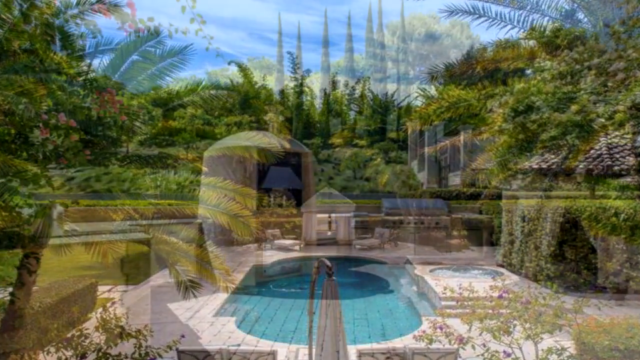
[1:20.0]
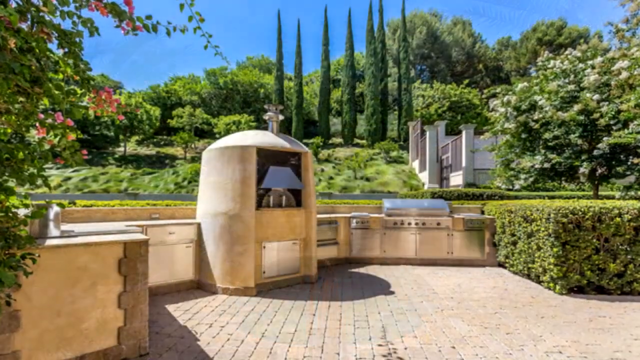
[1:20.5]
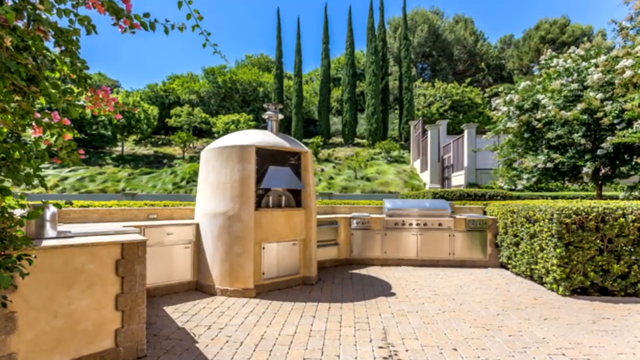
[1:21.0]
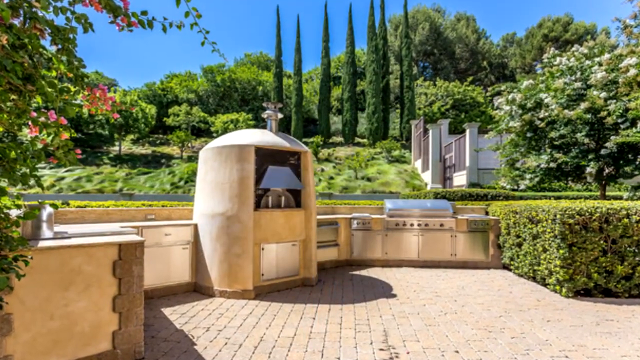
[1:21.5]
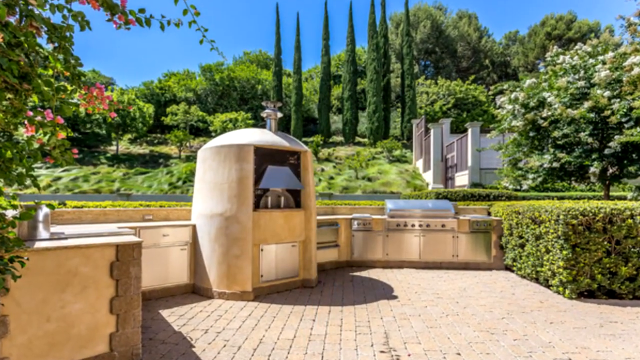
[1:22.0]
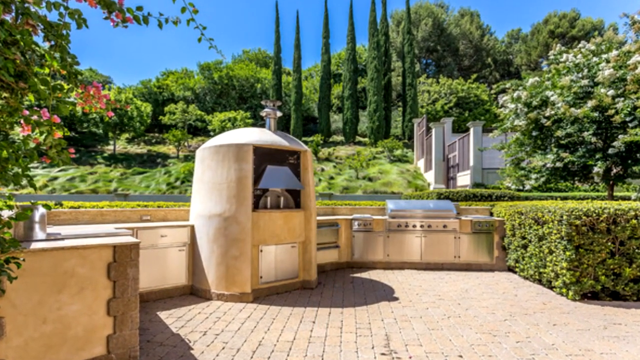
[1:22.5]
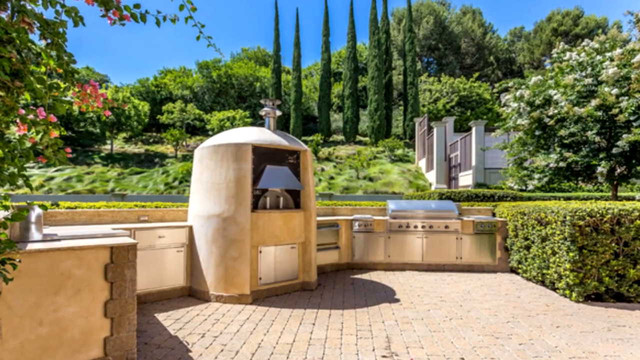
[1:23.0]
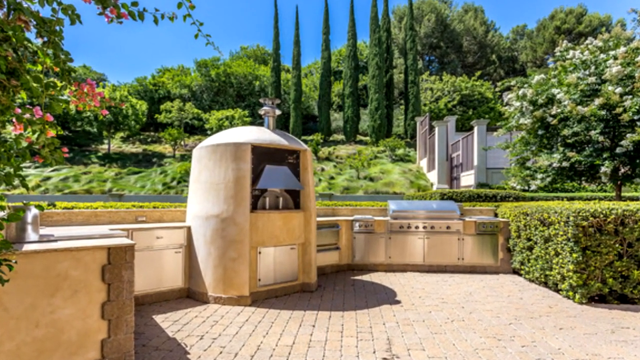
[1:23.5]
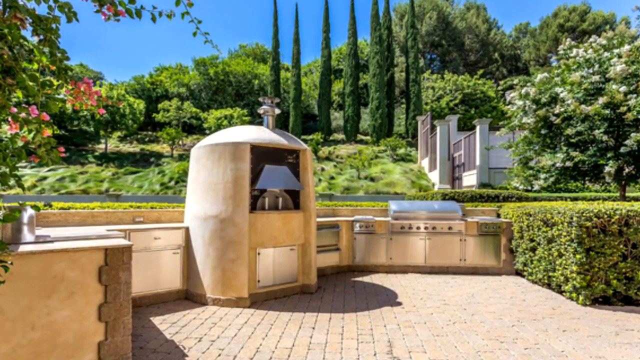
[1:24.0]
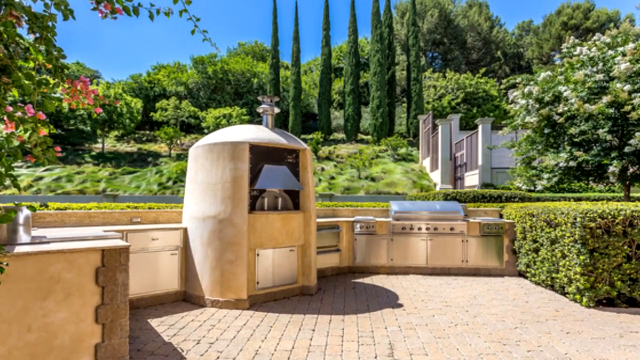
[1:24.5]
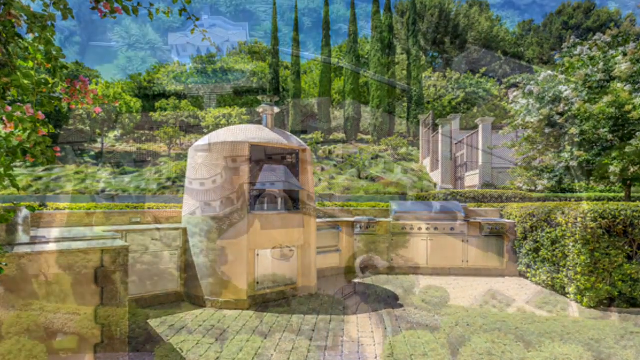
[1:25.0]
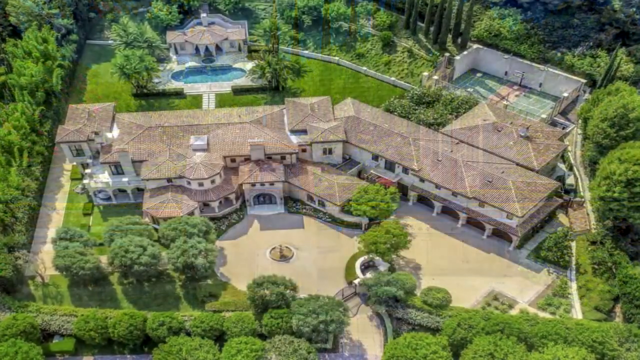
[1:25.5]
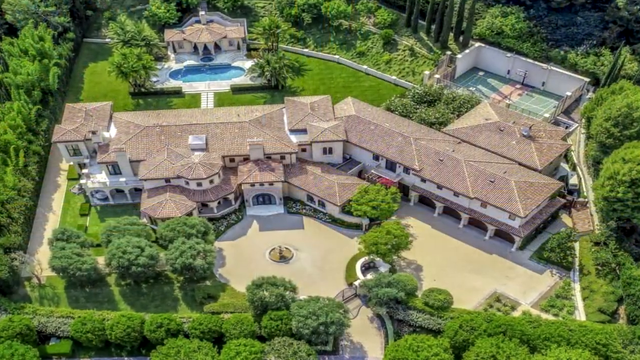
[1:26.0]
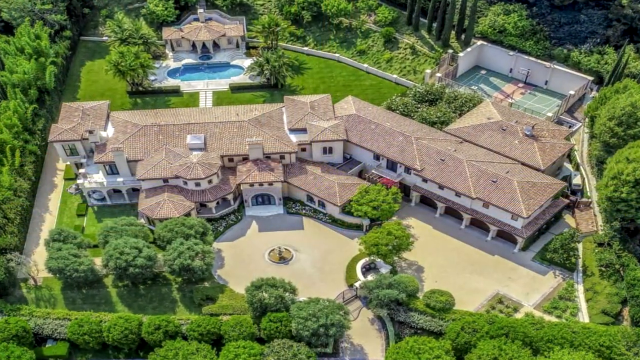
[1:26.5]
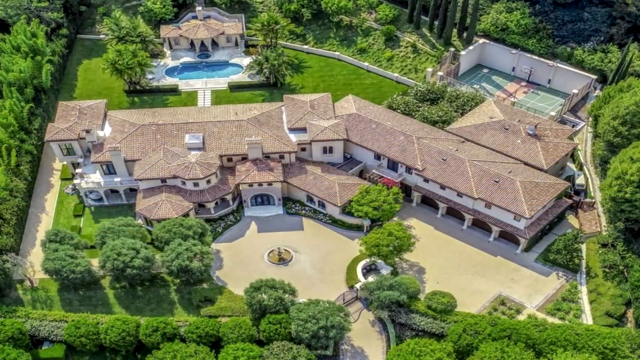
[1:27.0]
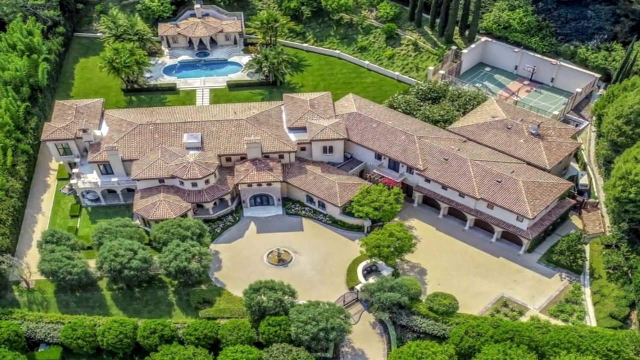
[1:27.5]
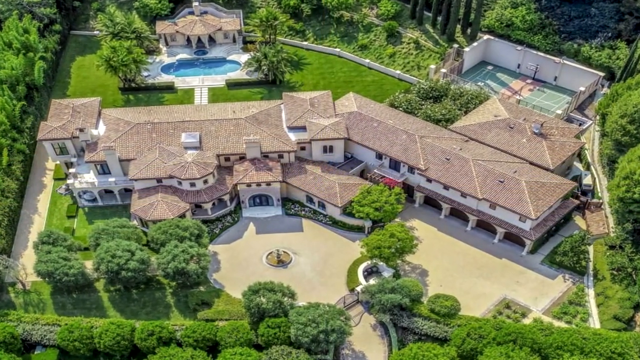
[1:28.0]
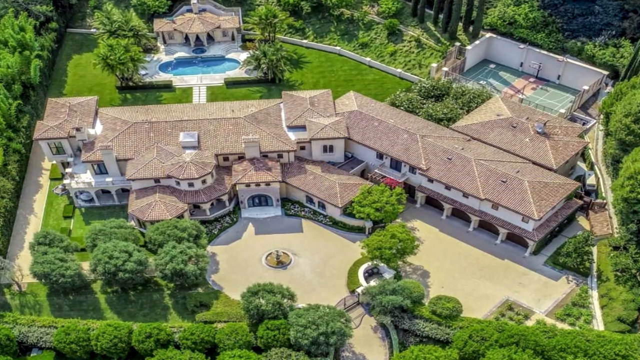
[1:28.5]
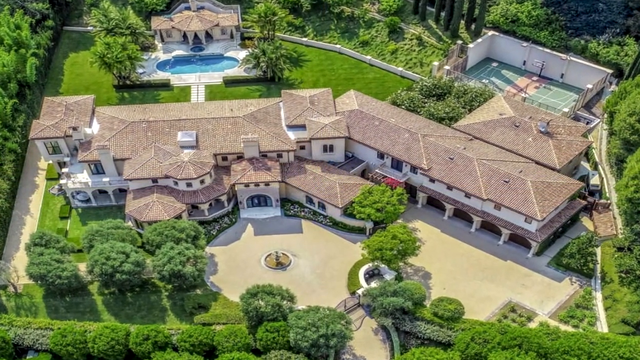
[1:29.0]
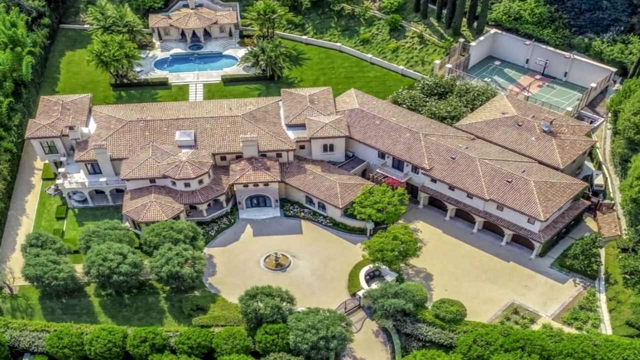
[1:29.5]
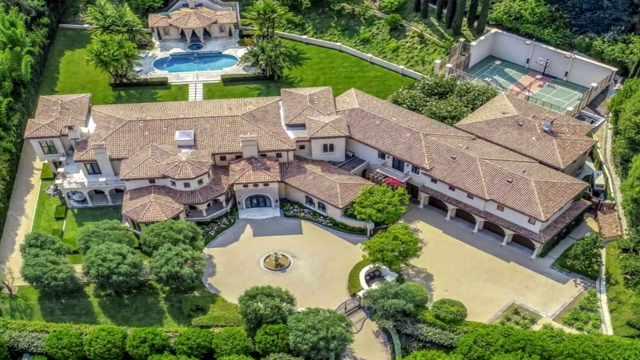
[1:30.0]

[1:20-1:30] An area that appears to be a barbecue area outside the house has a large stainless steel grill with different cabinets attached to it. In the background are a lot of tall trees as well as thinner trees. An aerial shot of the villa then shows a tennis court in the top right and a pool in the top left portion. The shots are taken during the daytime, and the blue sky is slightly visible.